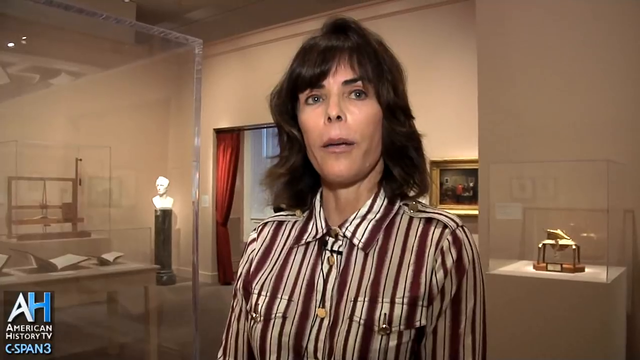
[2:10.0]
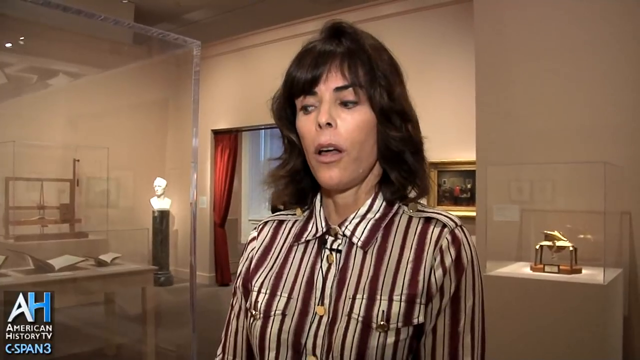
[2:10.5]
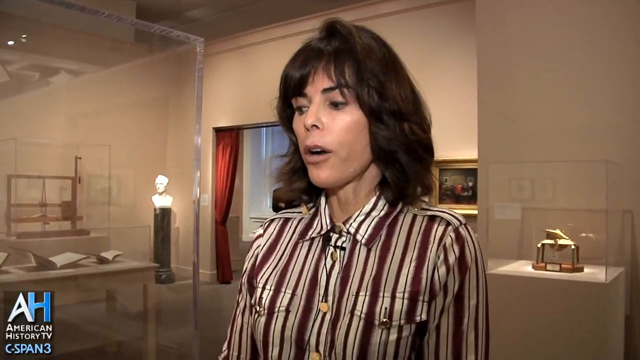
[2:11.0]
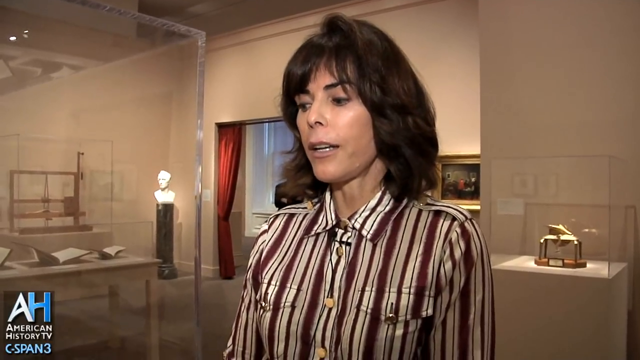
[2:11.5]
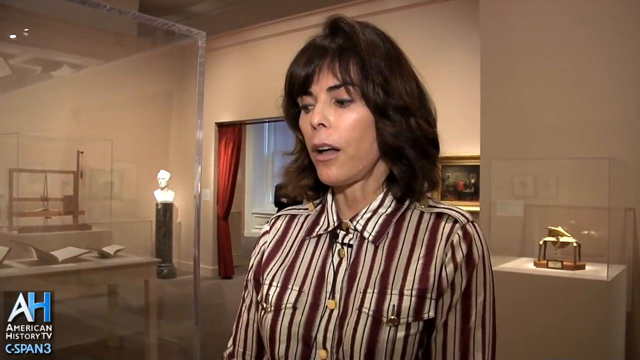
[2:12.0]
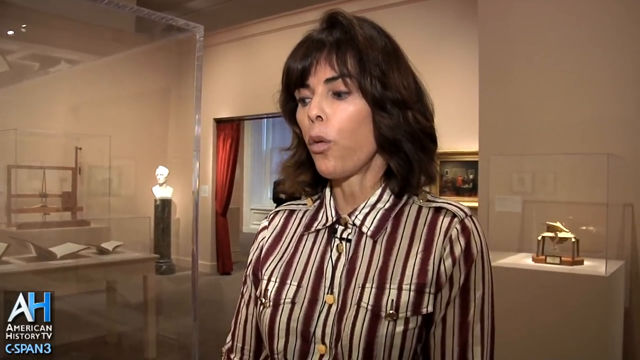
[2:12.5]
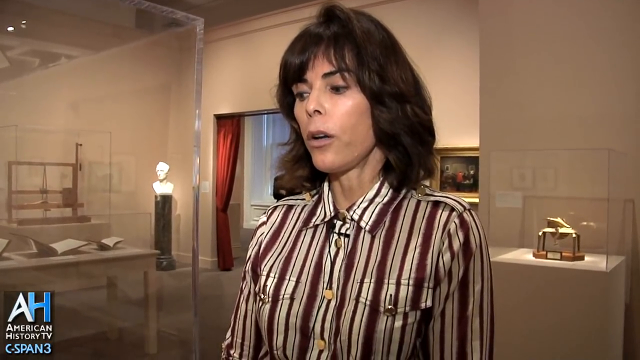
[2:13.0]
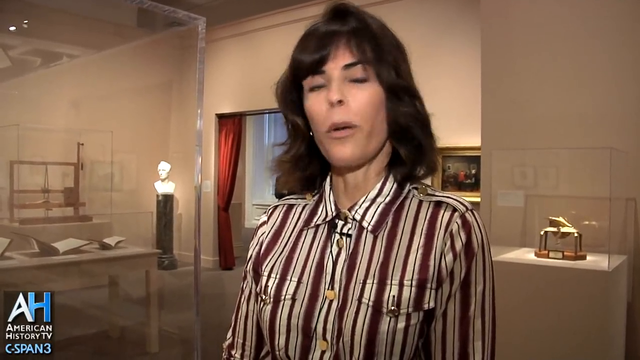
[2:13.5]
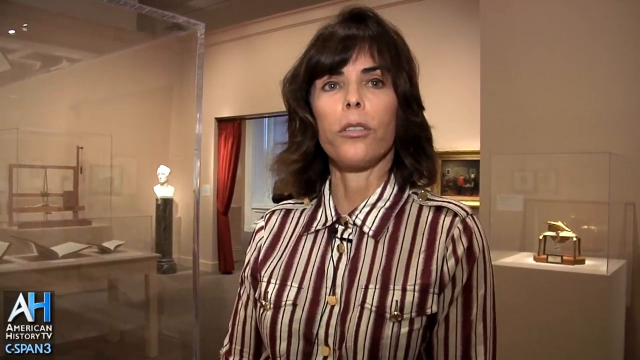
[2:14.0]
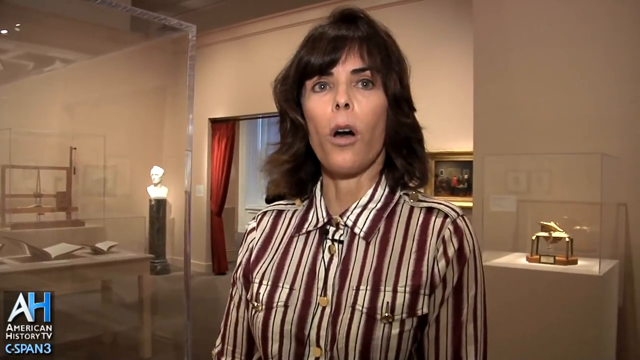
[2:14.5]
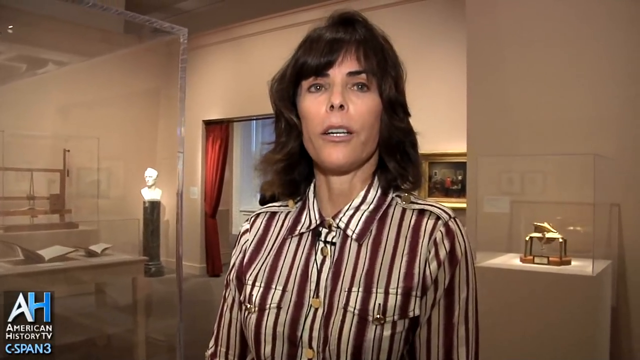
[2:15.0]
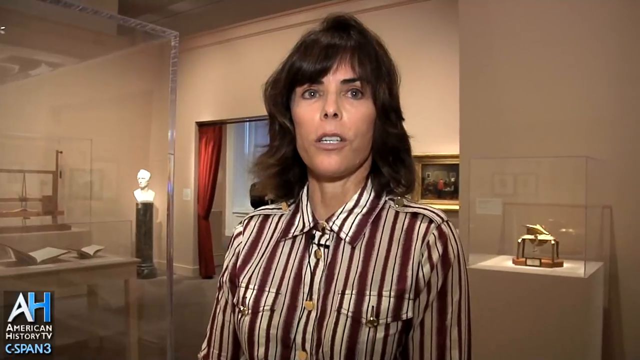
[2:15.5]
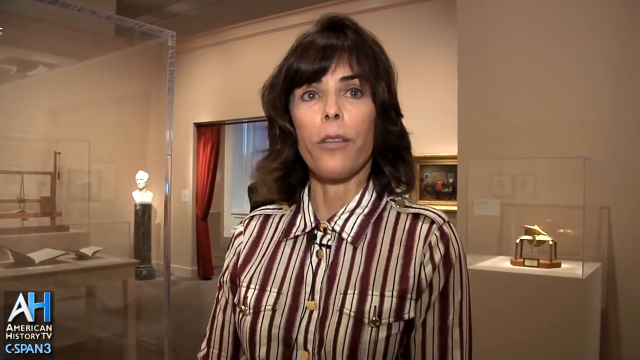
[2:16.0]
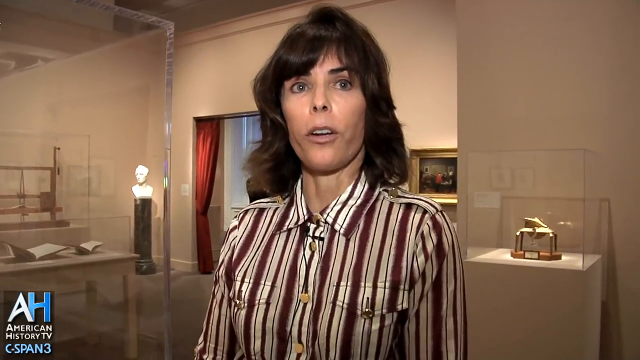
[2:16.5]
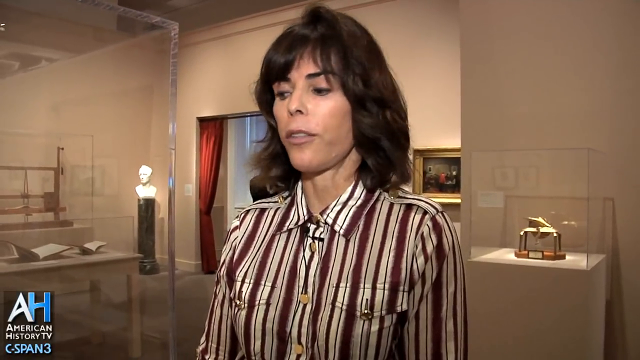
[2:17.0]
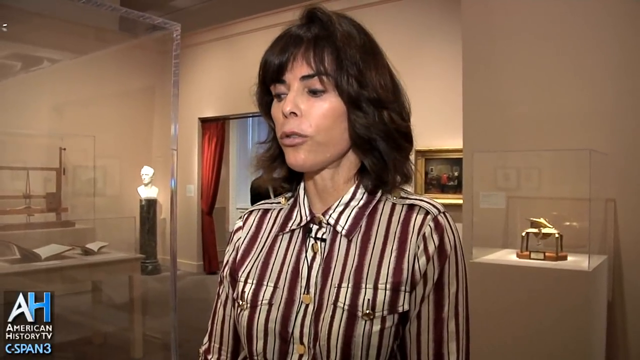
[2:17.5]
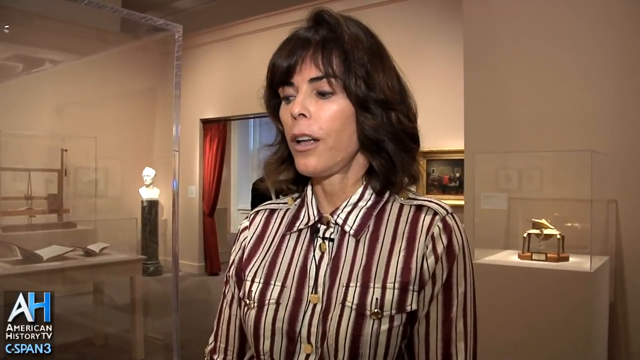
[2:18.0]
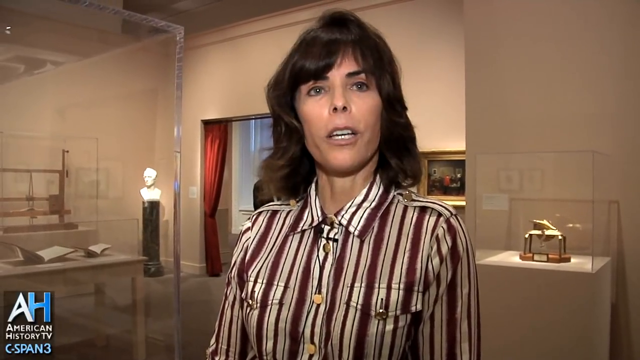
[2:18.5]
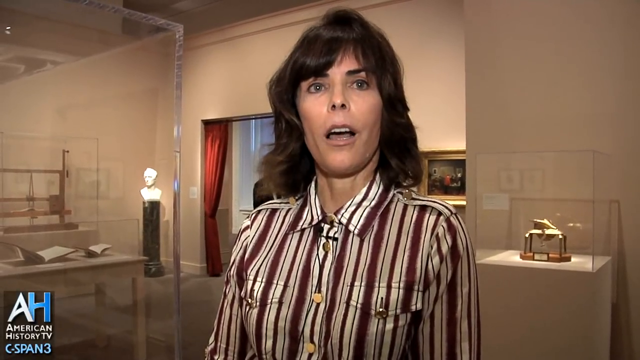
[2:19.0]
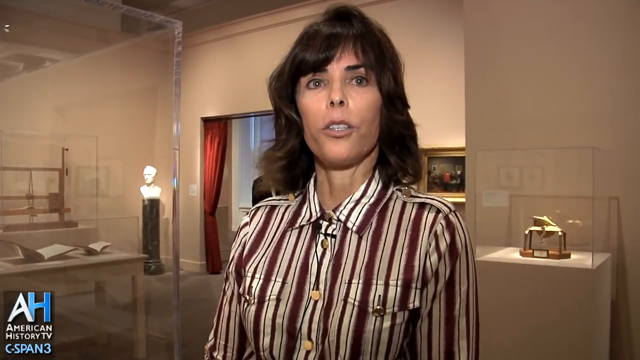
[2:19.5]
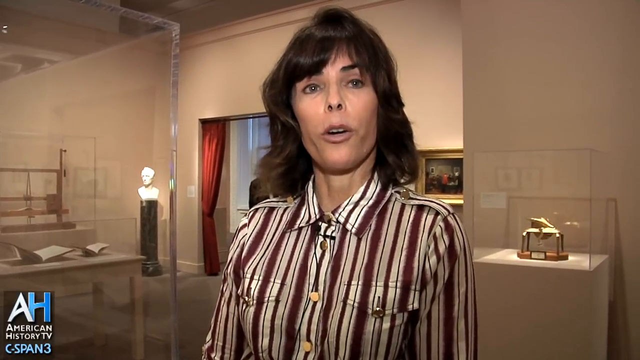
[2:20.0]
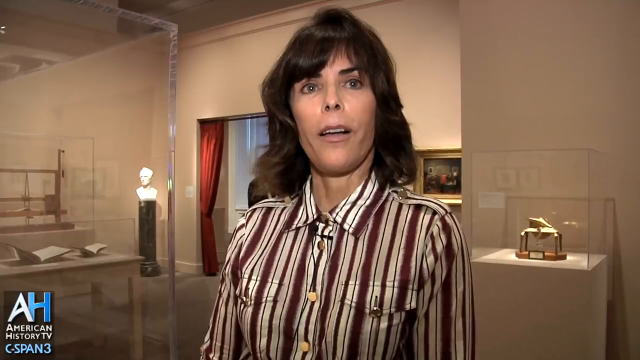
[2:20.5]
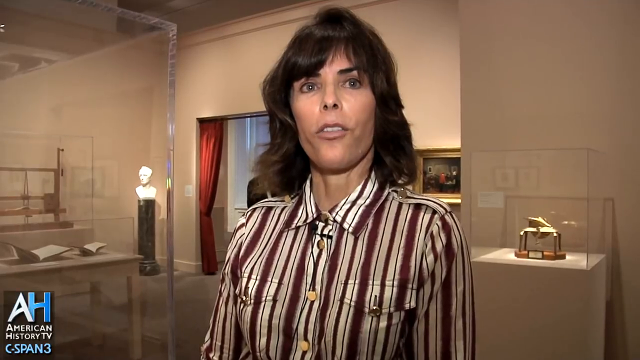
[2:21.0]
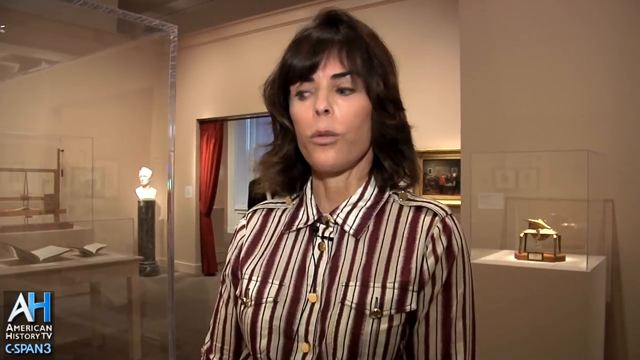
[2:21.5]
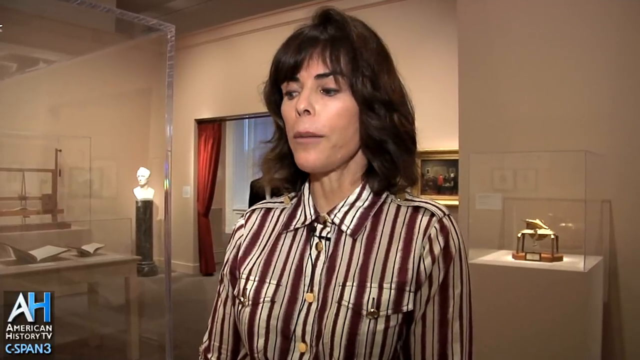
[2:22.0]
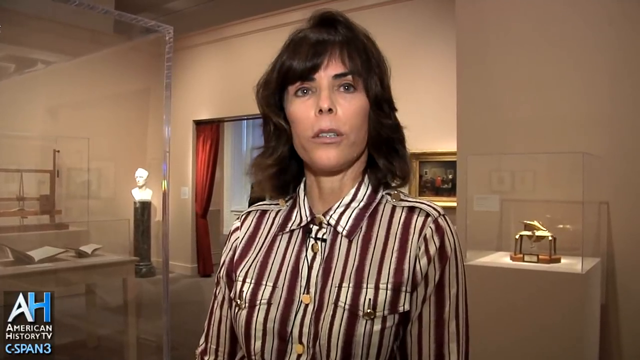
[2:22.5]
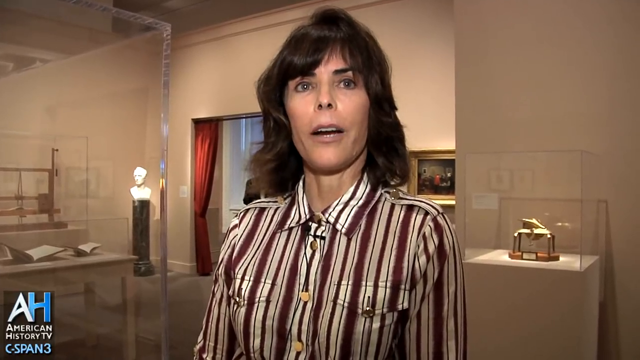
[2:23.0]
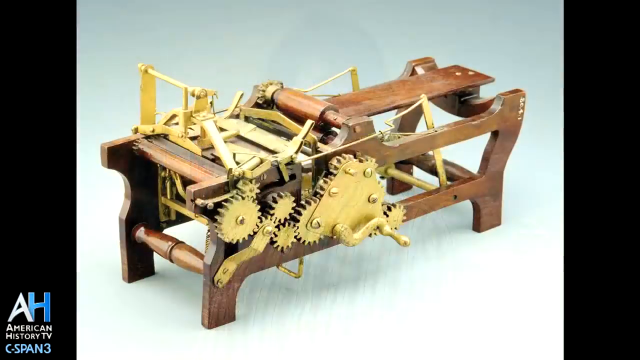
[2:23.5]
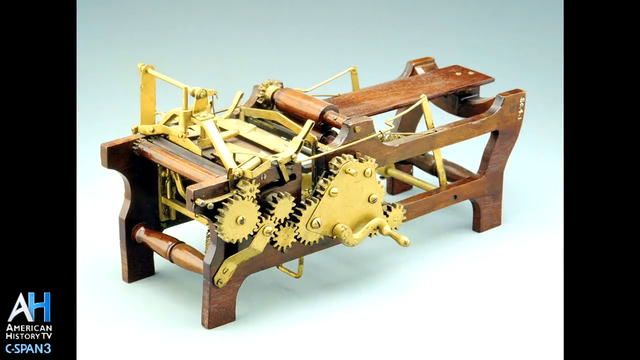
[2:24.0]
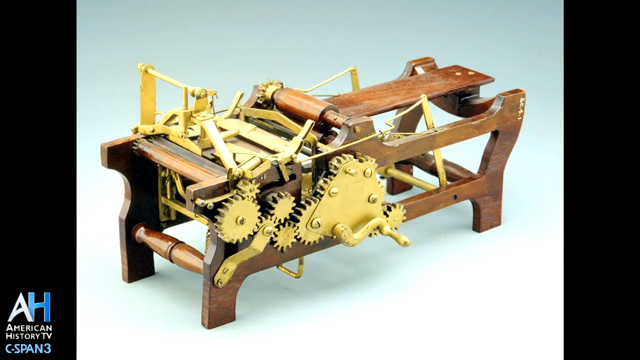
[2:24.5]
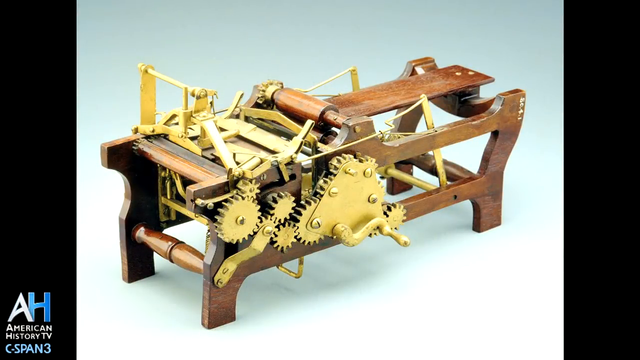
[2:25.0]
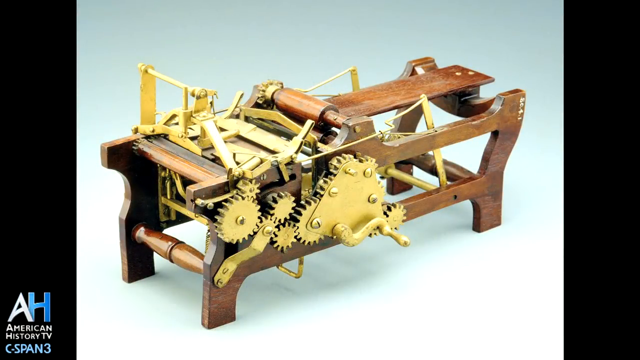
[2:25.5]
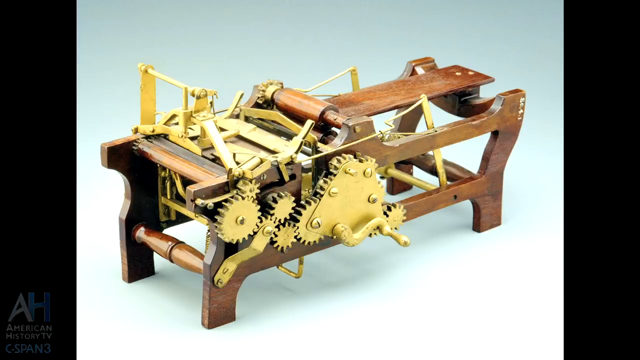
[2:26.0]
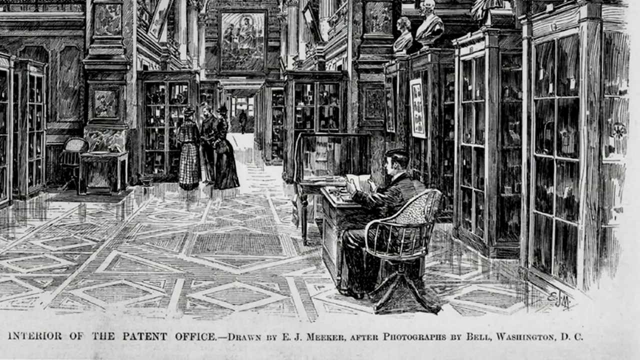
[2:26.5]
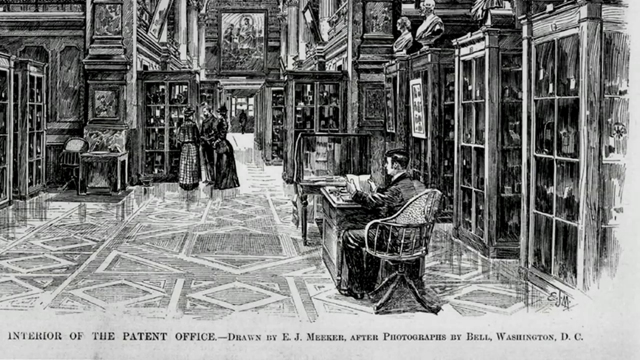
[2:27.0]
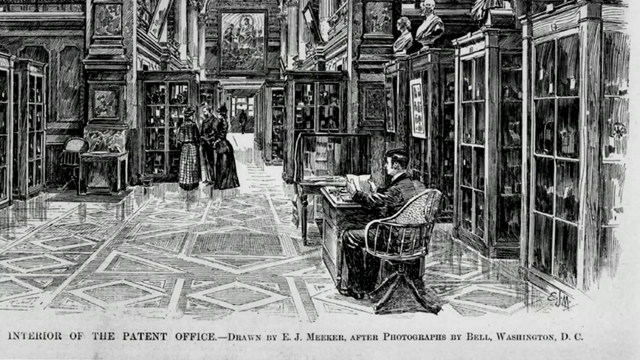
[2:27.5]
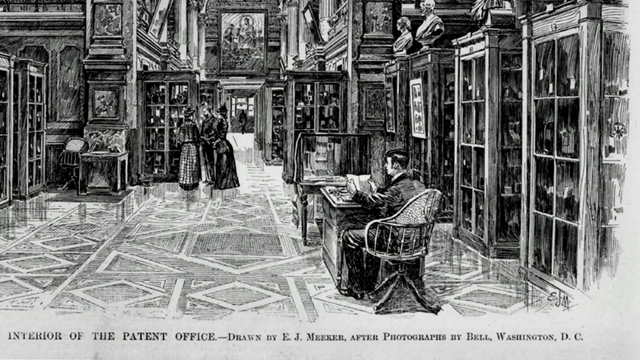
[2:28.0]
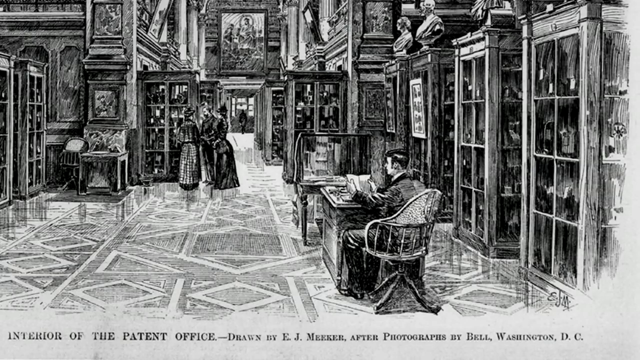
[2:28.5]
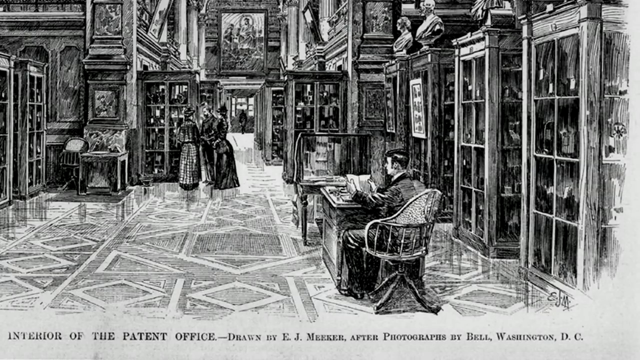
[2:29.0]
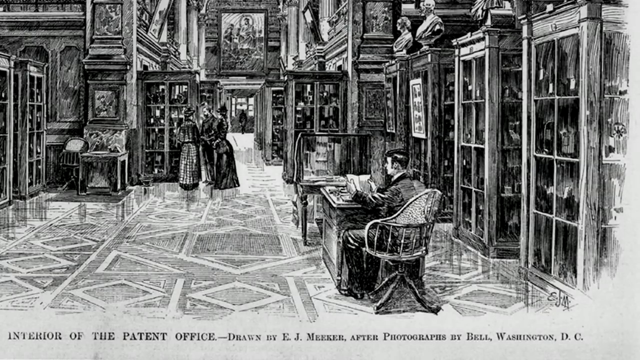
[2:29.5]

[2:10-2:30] Inside the Smithsonian Museum, different types of inventions are shown. A brunette woman with layered hair, wearing a vertically striped beige and maroon silk blouse, talks about an invention inside a glass case, a wooden frame with lots of gears, levers and cogs. The video shows the interior of the patent office as a cartoon-like drawing from the Victorian era. It looks Victorian and somewhat like a gallery, with two Victorian ladies wearing hats in the distance and a clerk in the foreground sitting at a desk, looking off into the distance.